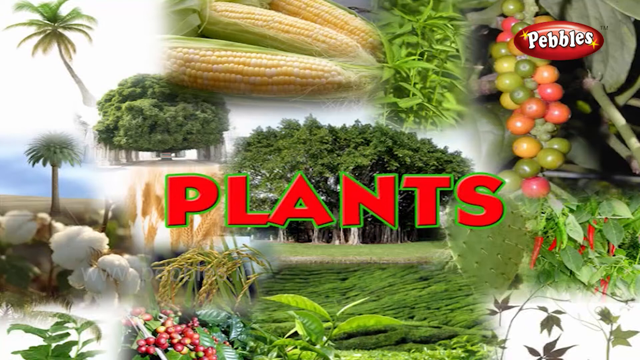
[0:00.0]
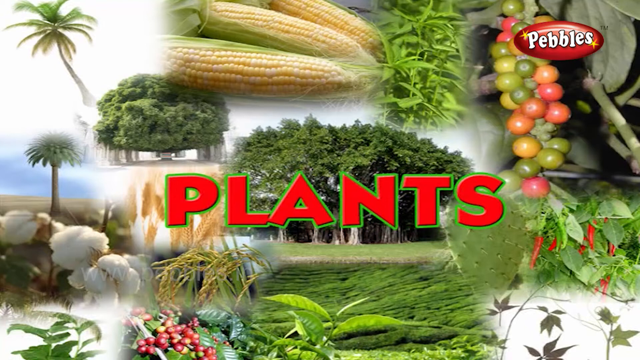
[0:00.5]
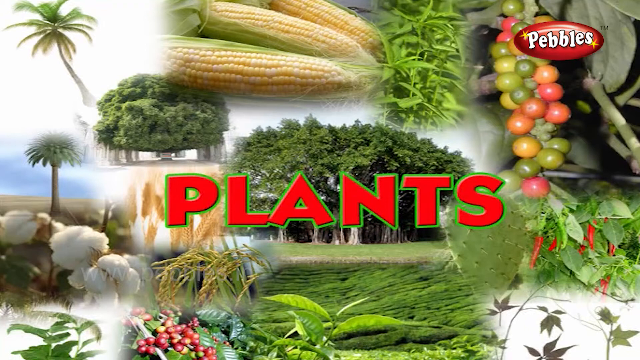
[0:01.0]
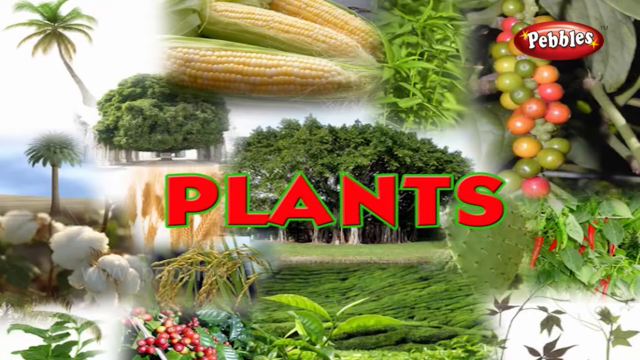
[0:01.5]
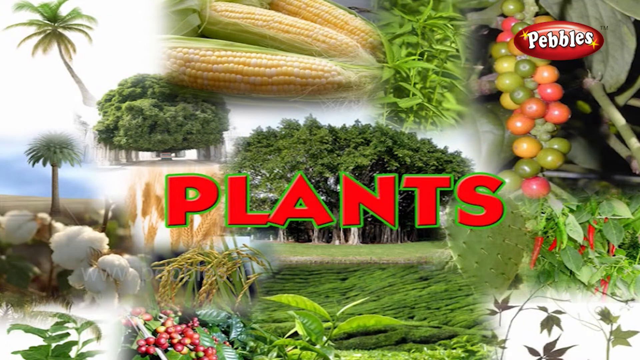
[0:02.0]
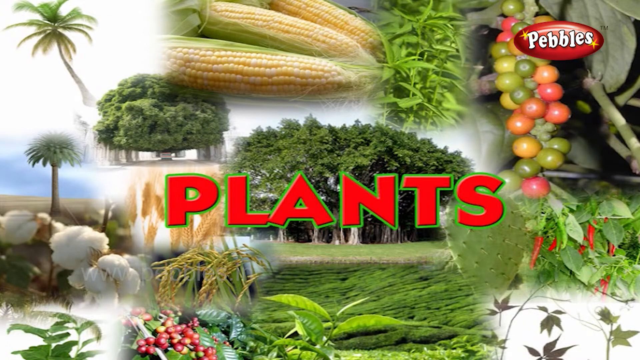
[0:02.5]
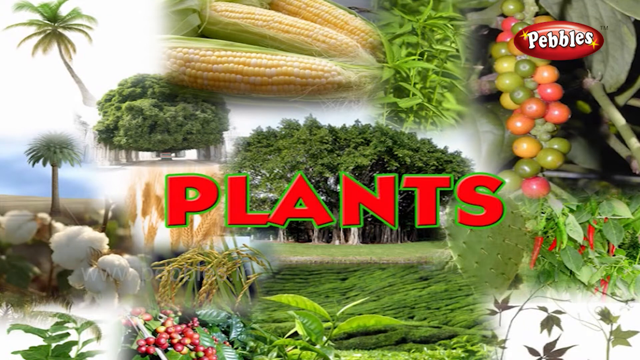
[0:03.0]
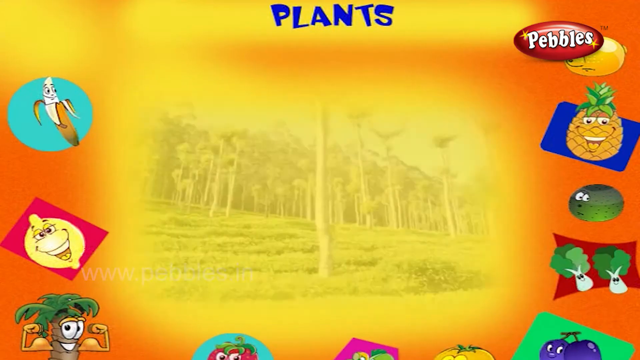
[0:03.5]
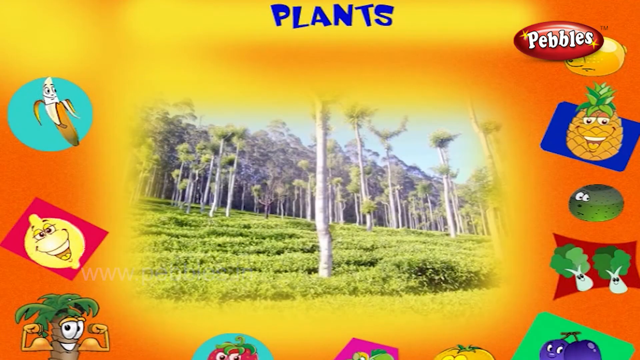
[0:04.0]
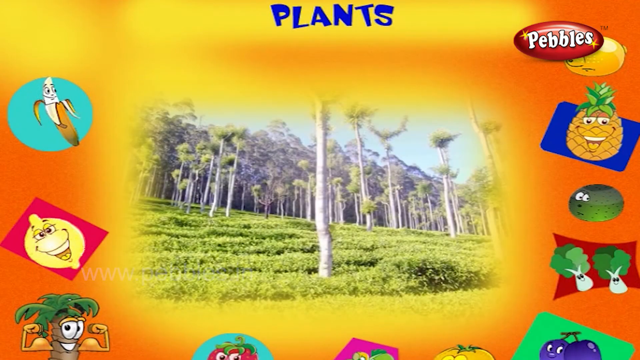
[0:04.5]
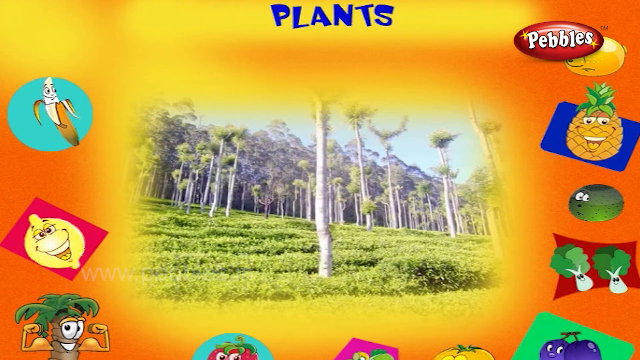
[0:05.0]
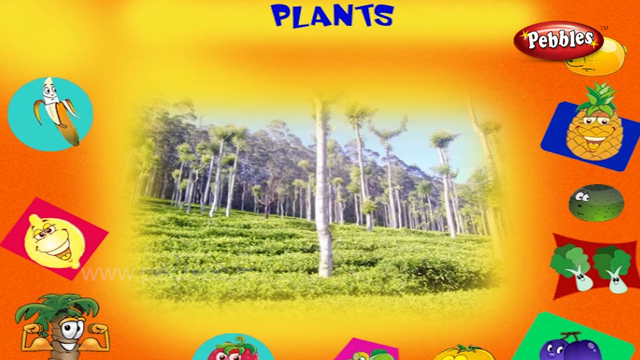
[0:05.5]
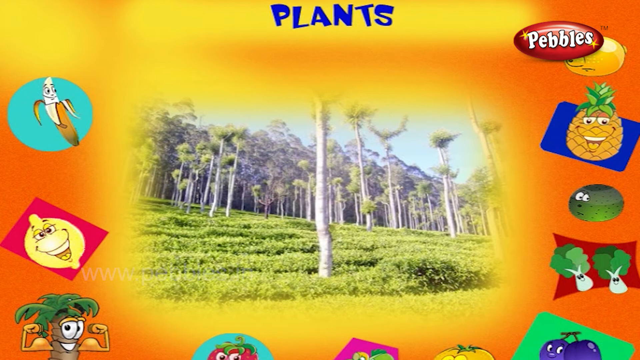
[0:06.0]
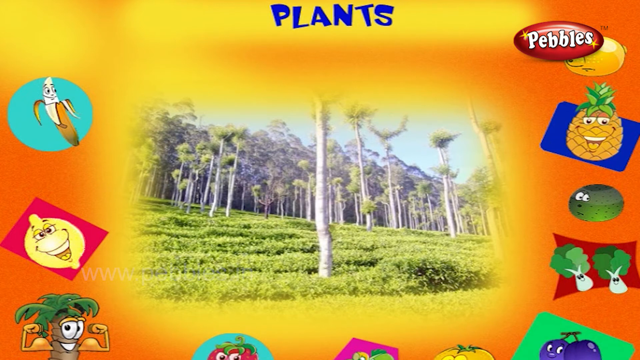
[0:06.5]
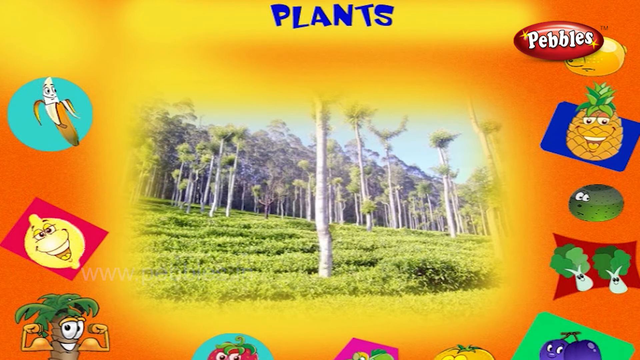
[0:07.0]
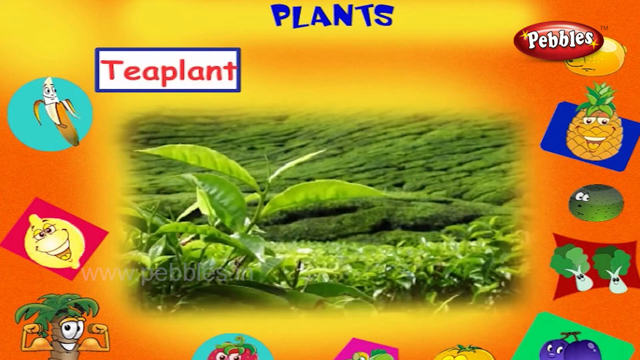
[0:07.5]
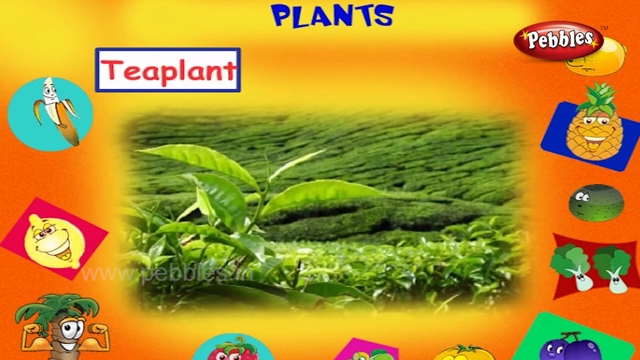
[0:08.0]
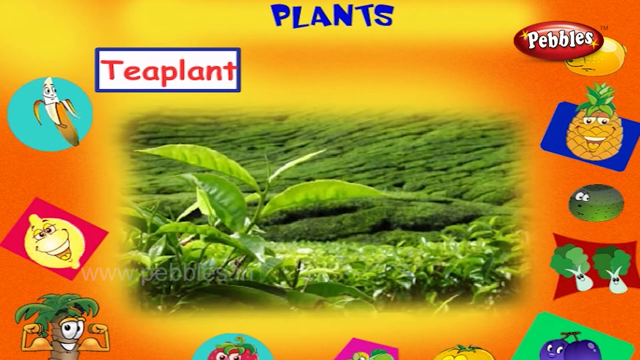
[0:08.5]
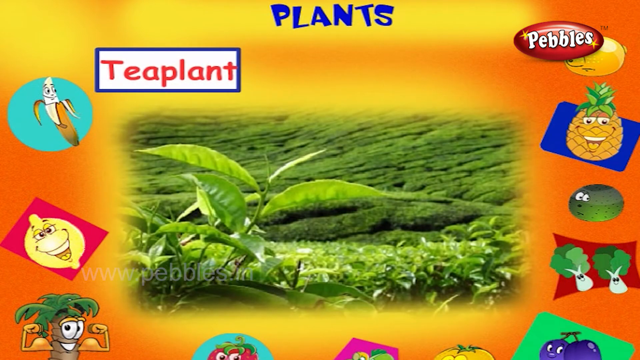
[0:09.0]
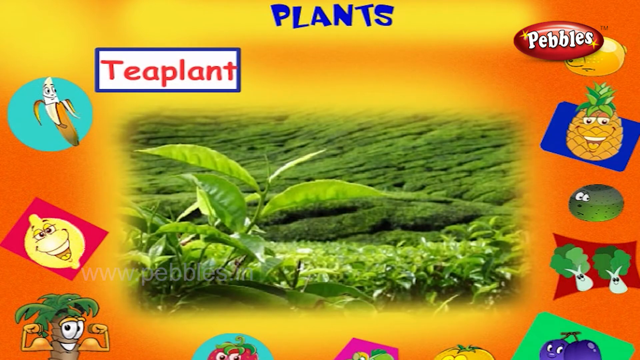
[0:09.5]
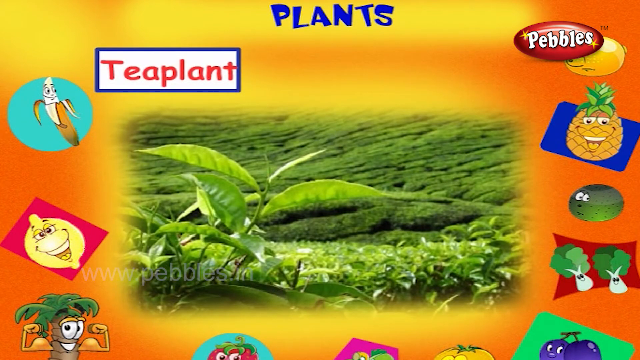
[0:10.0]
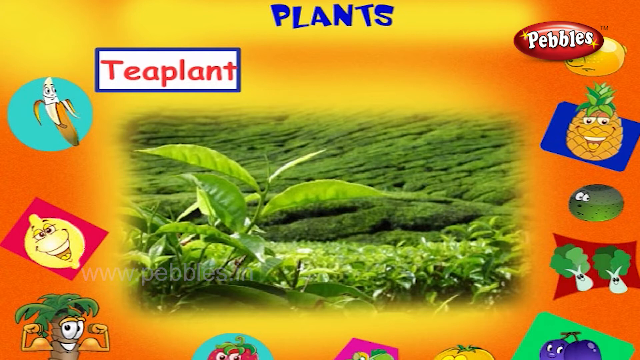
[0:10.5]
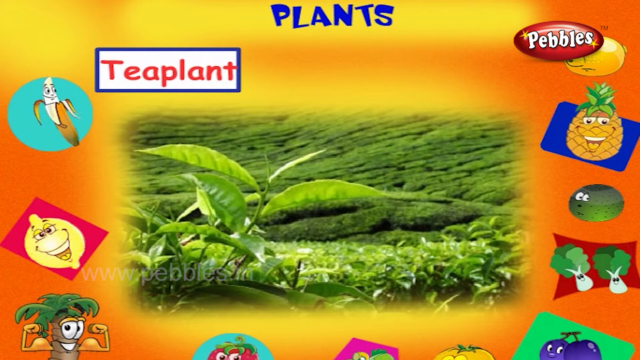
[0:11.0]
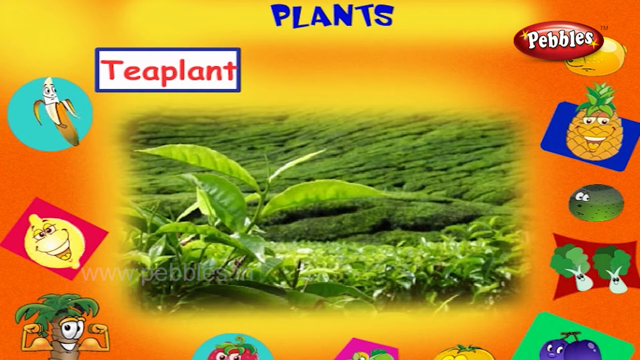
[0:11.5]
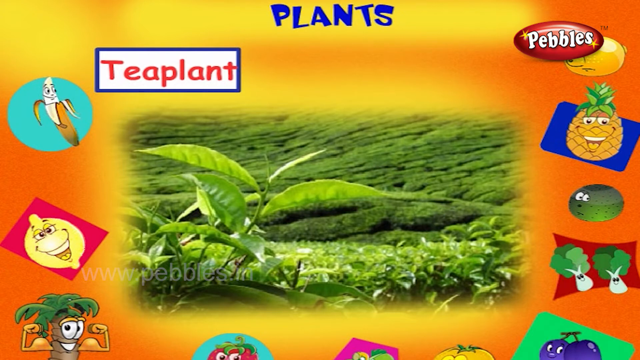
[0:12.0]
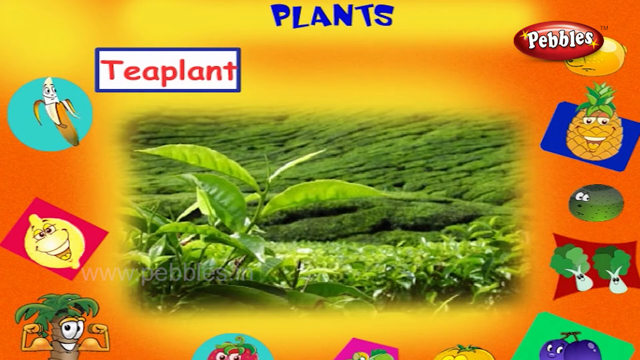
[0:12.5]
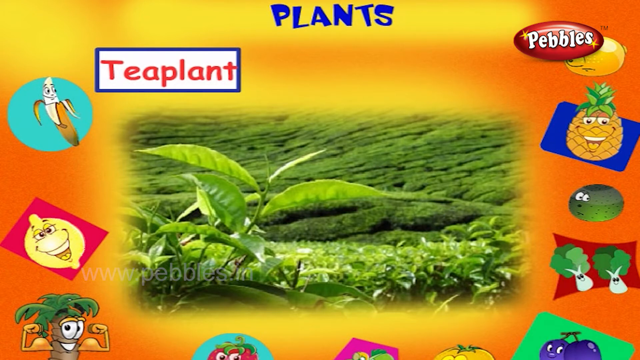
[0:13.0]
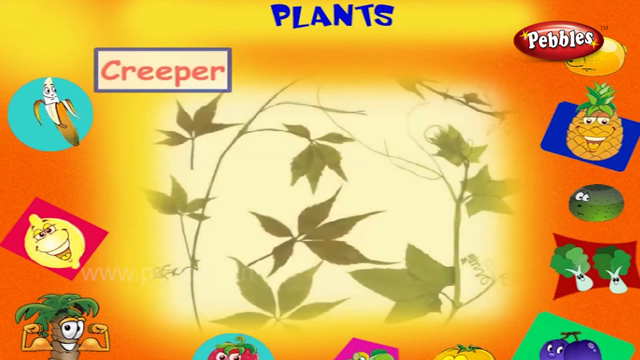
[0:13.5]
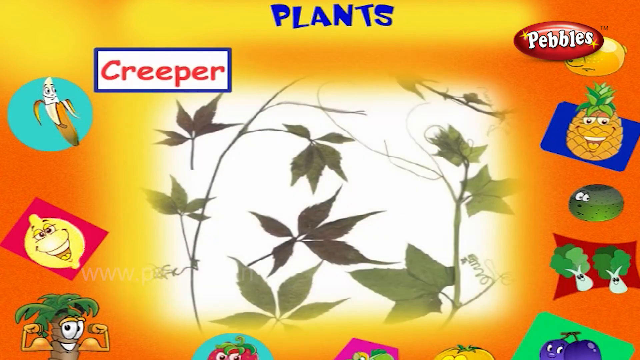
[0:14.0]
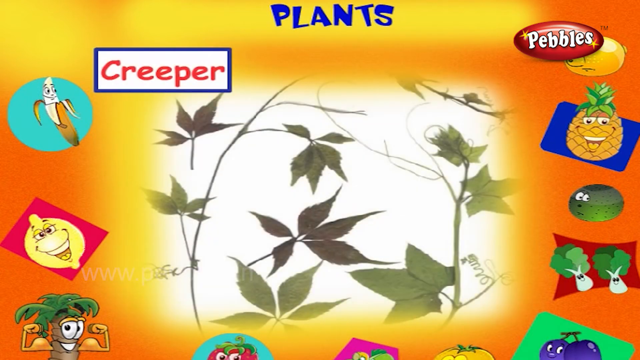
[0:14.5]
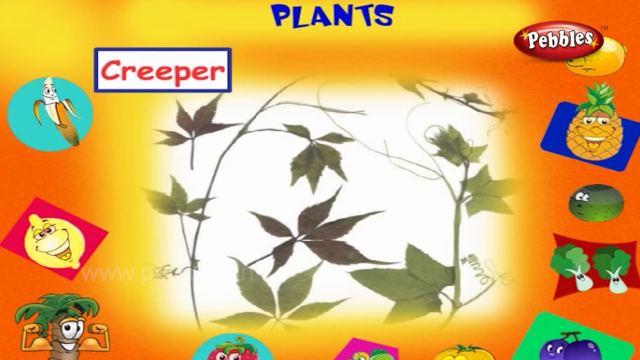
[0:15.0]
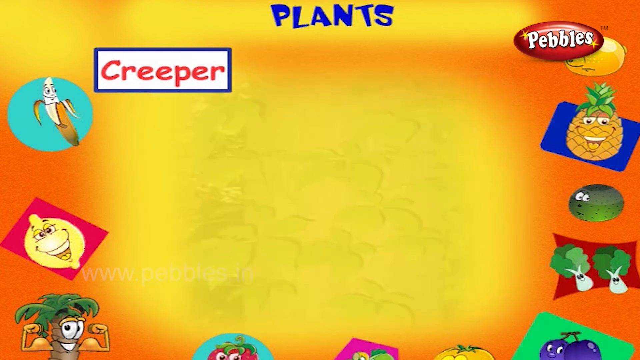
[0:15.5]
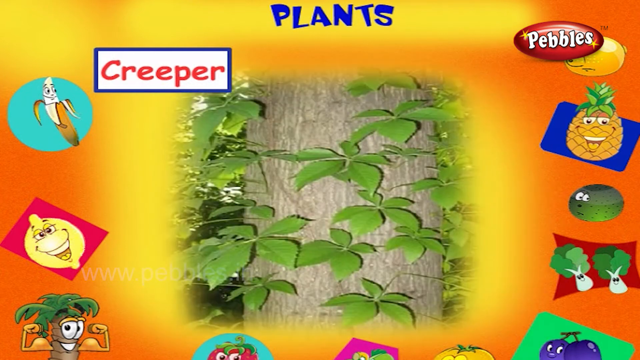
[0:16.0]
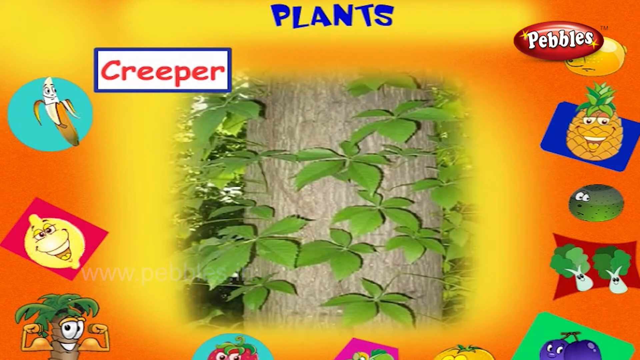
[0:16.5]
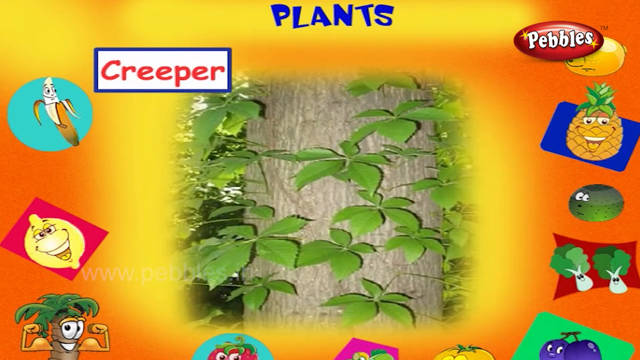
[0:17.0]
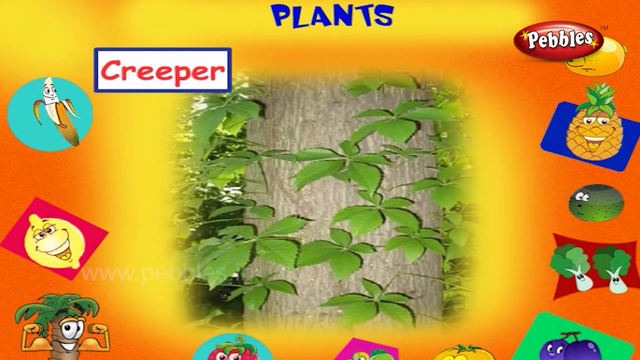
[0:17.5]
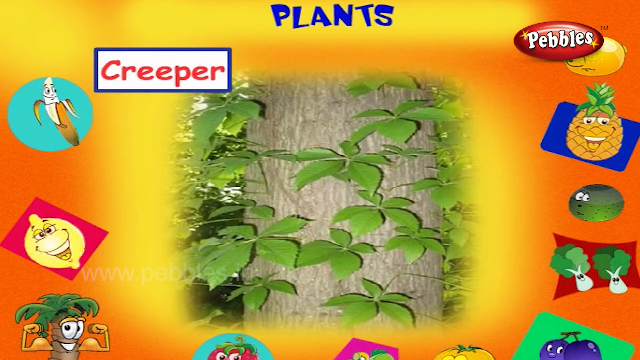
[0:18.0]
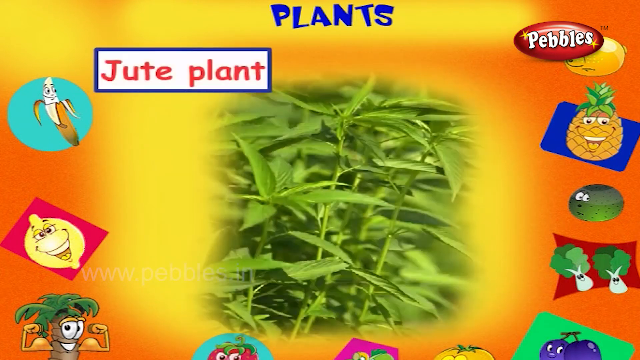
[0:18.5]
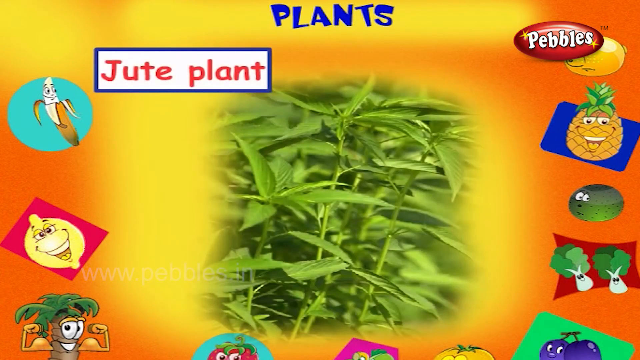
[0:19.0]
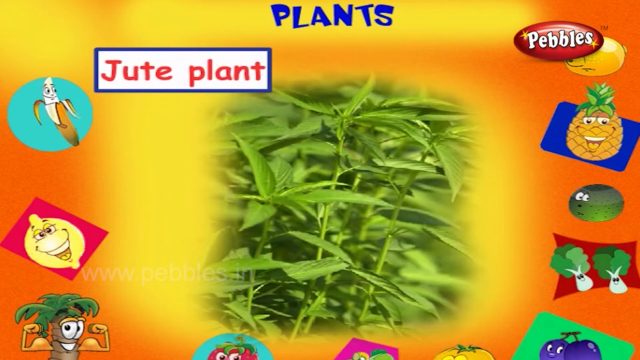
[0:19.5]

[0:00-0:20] A headline reading "plants" appears along with pictures of maize and of different types of vegetables, including pepper and tomatoes, as well as various illustrations of plants. There is also a picture of trees, gardens of plants such as tea, flowers, and other plants growing on other trees. On the sides are images of plants, including pineapples, bananas and oranges. The video shows different types of plants and trees.